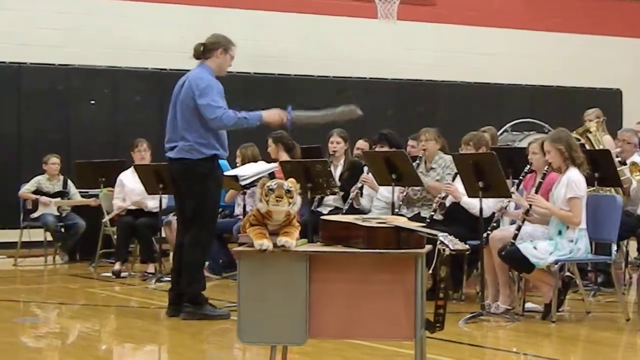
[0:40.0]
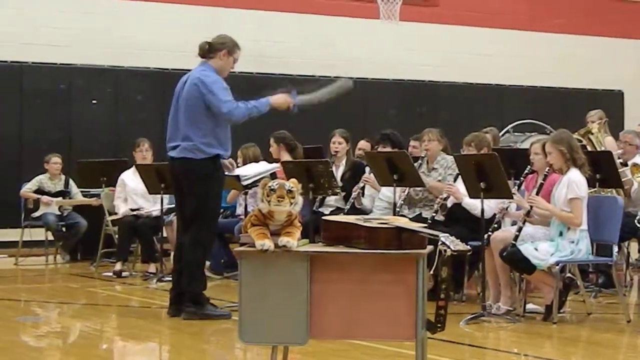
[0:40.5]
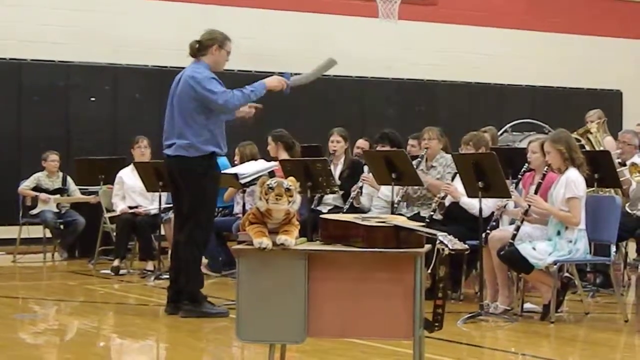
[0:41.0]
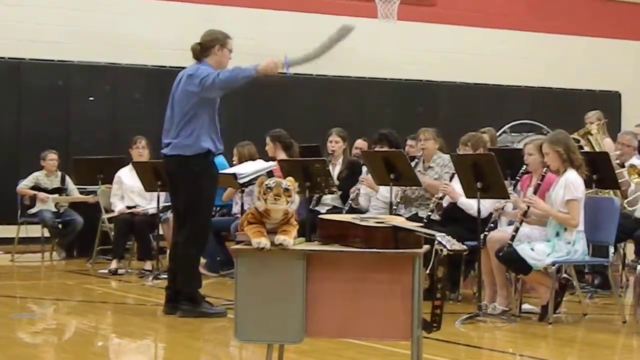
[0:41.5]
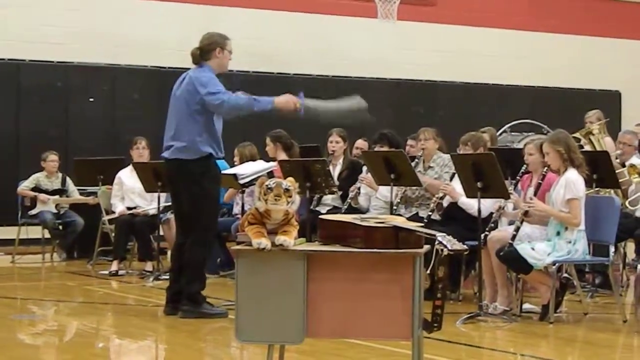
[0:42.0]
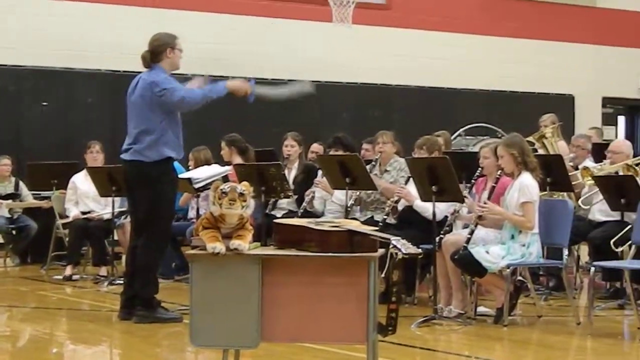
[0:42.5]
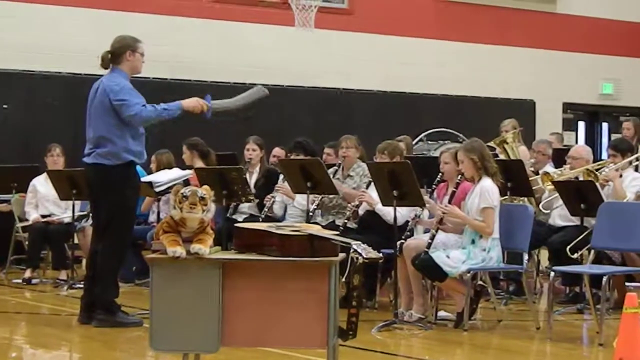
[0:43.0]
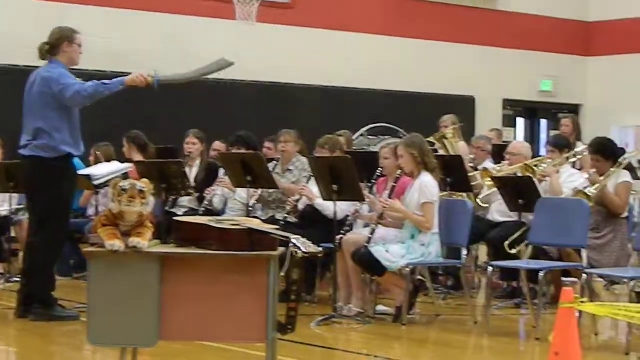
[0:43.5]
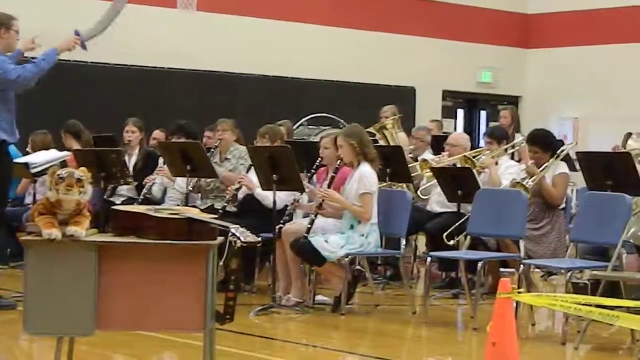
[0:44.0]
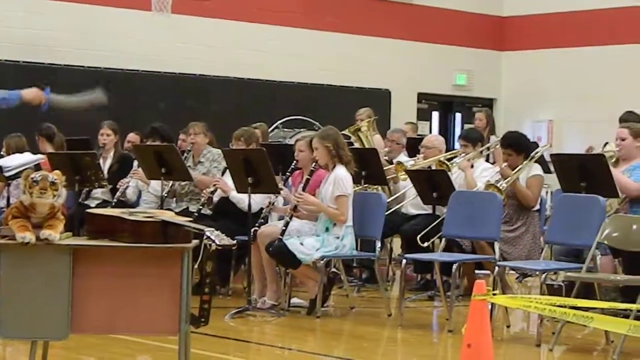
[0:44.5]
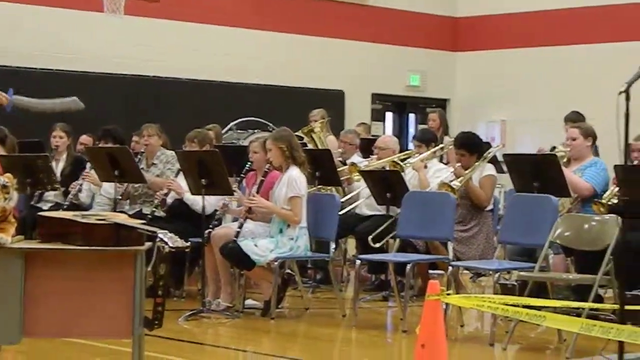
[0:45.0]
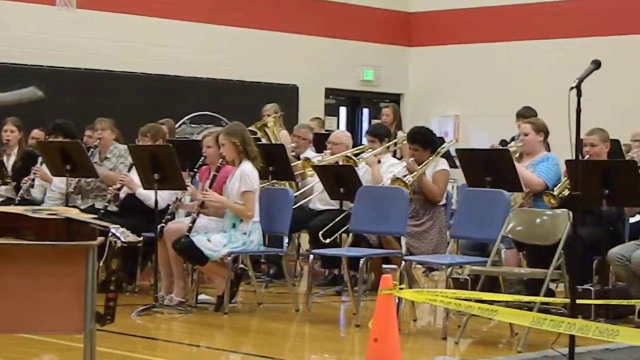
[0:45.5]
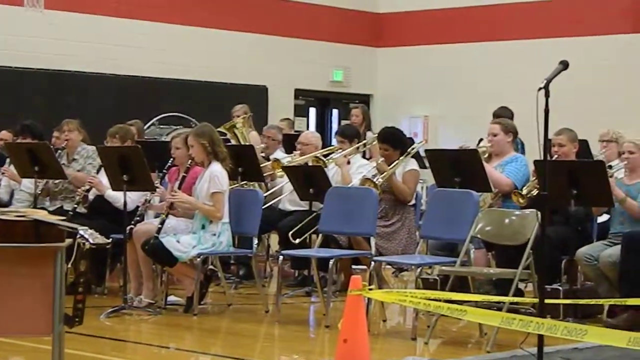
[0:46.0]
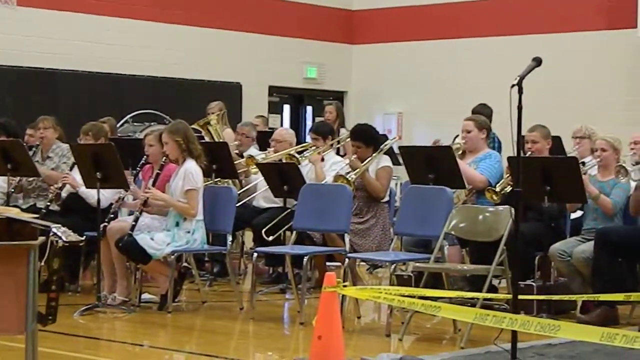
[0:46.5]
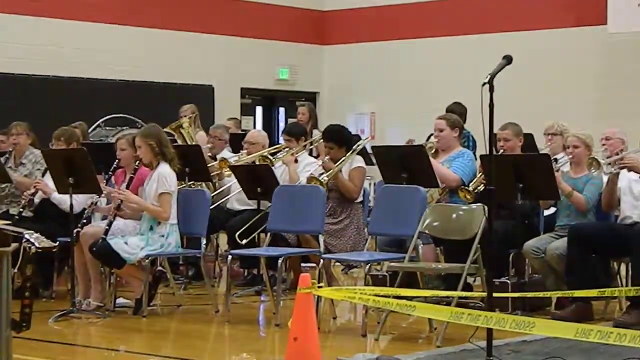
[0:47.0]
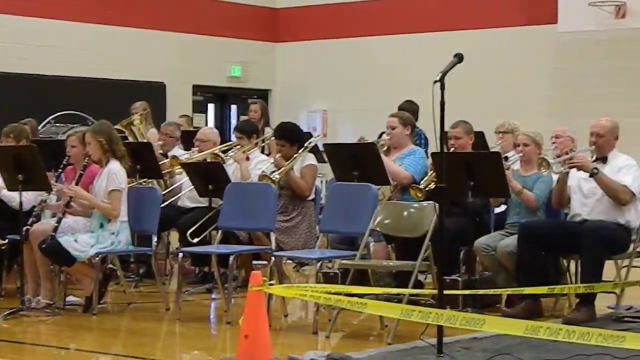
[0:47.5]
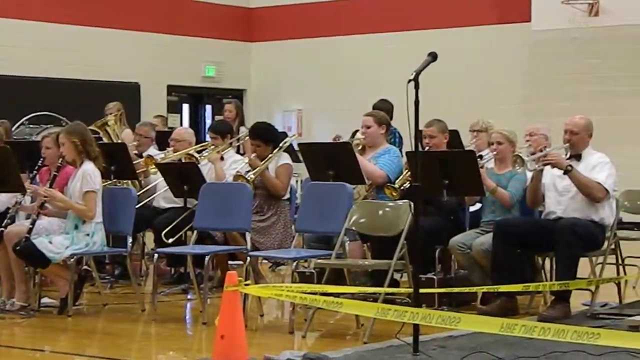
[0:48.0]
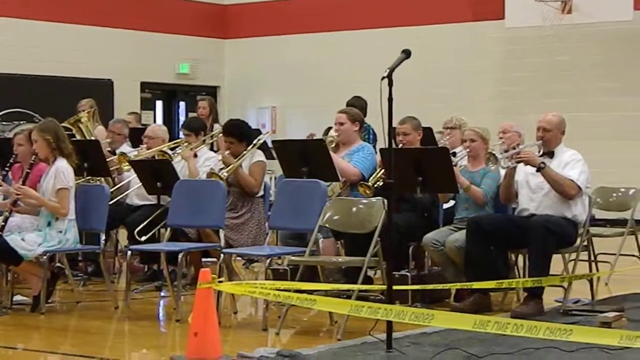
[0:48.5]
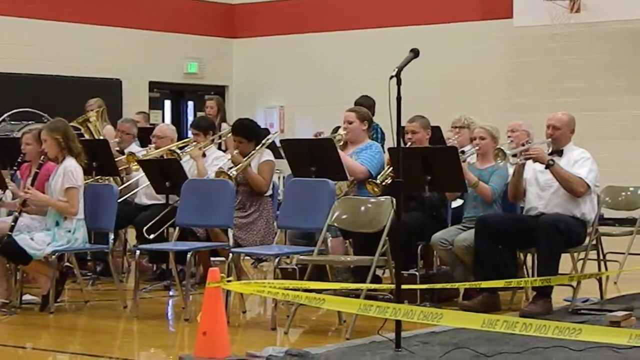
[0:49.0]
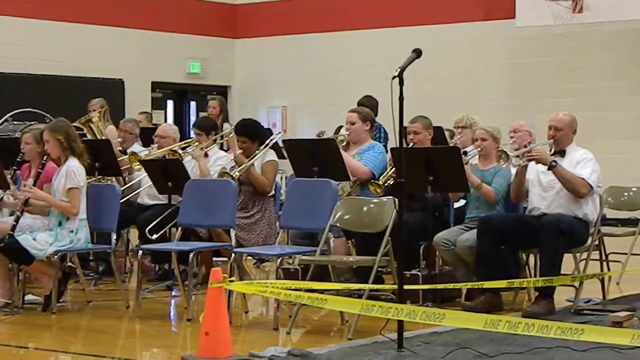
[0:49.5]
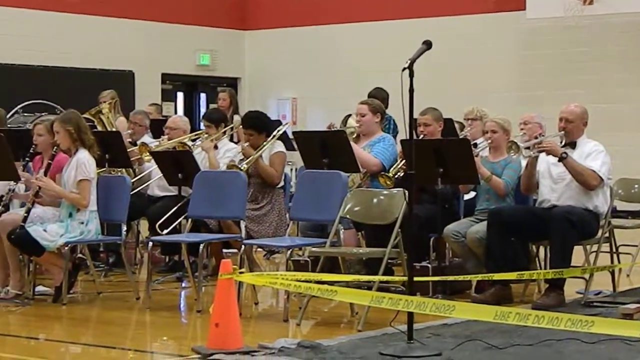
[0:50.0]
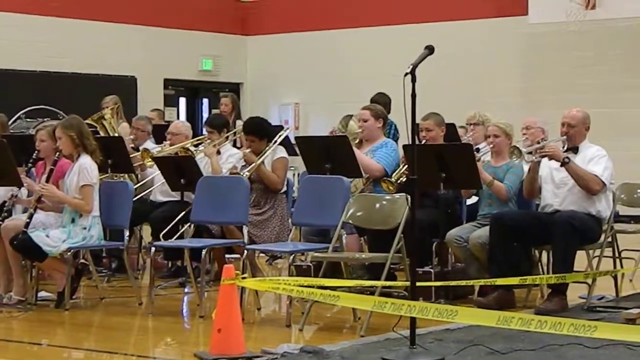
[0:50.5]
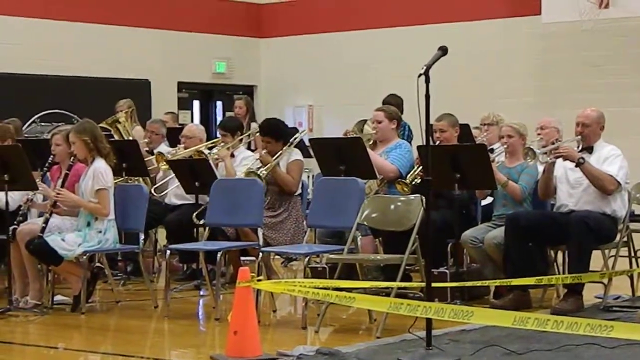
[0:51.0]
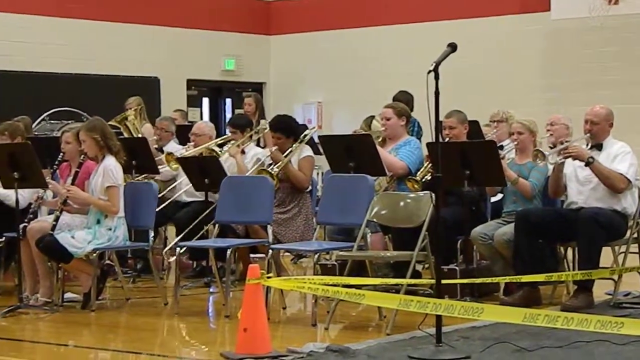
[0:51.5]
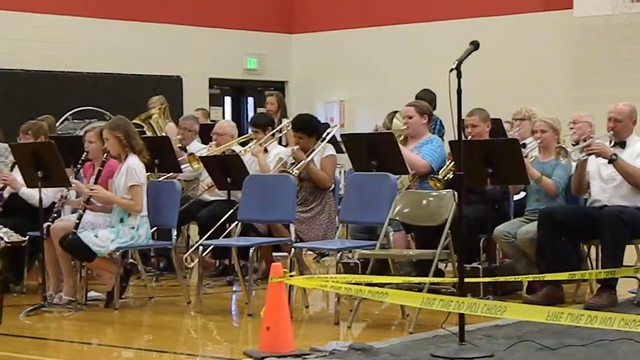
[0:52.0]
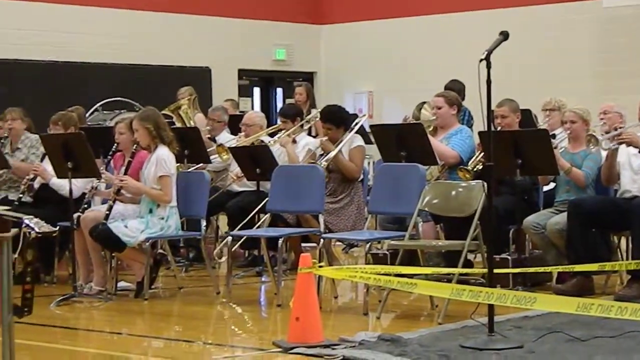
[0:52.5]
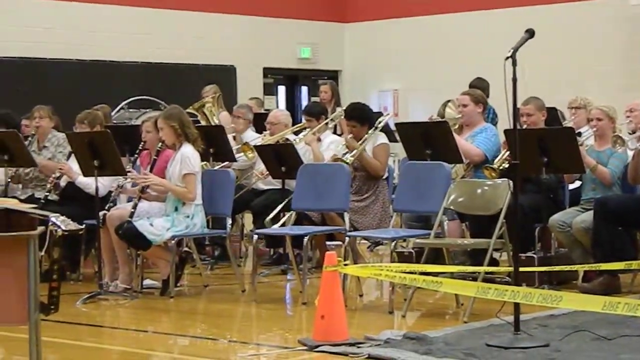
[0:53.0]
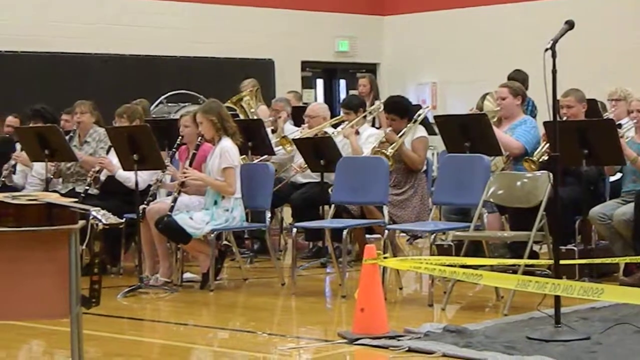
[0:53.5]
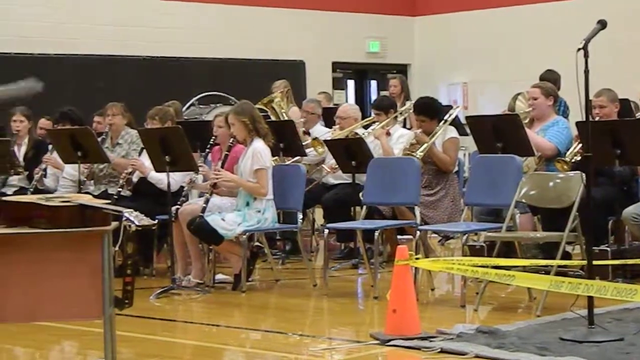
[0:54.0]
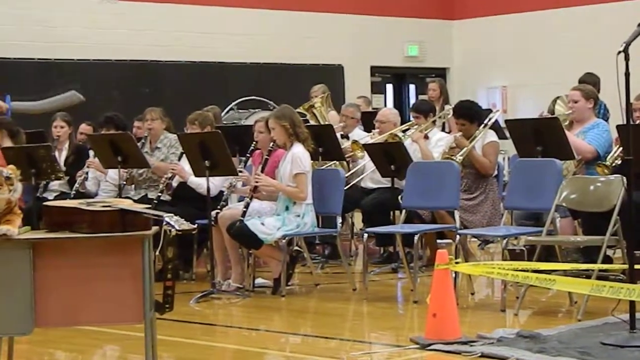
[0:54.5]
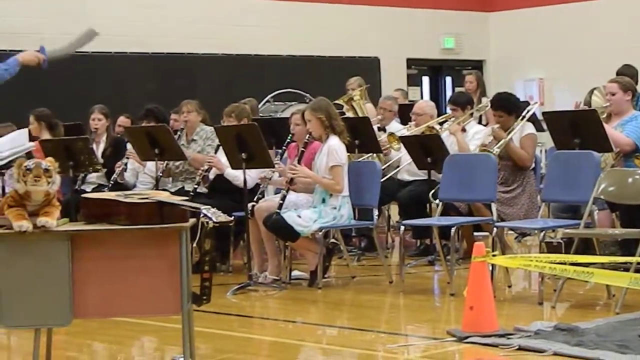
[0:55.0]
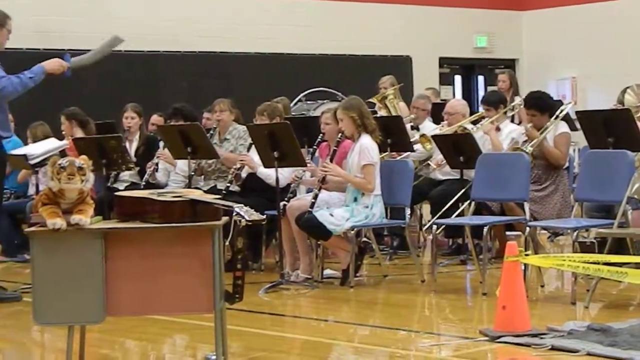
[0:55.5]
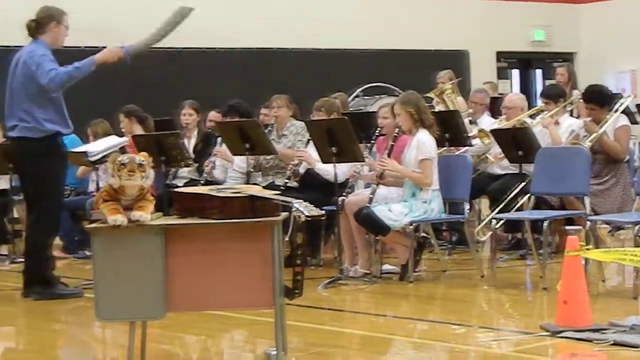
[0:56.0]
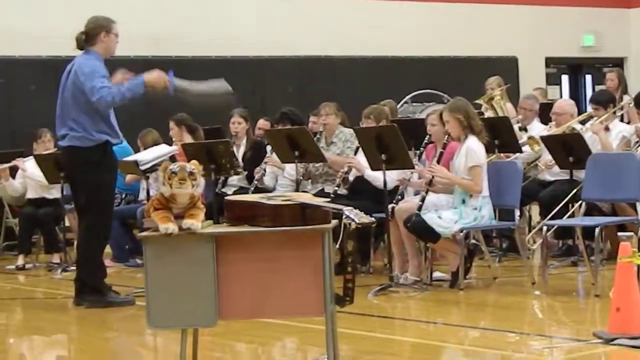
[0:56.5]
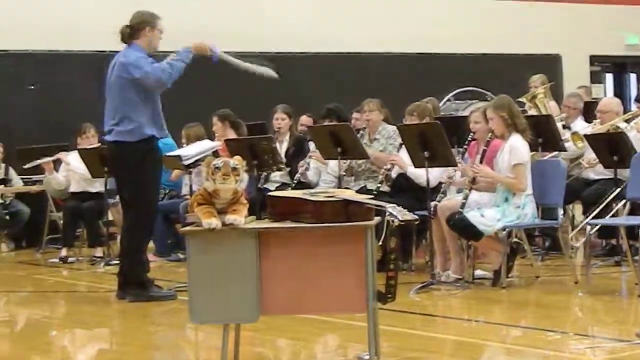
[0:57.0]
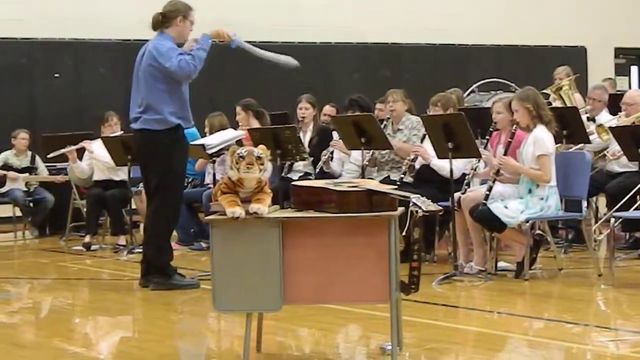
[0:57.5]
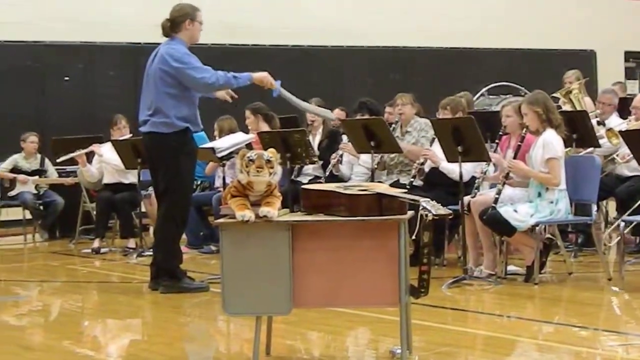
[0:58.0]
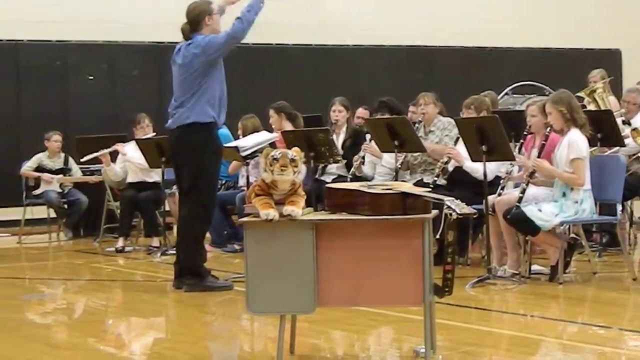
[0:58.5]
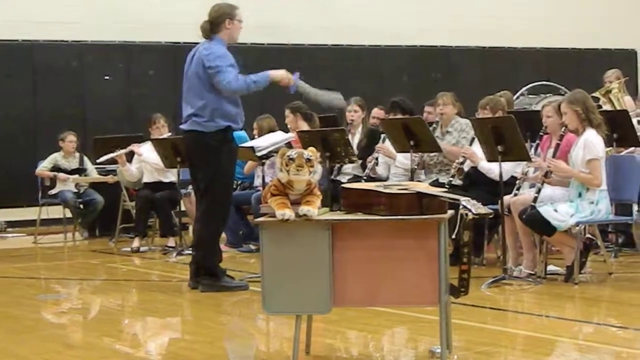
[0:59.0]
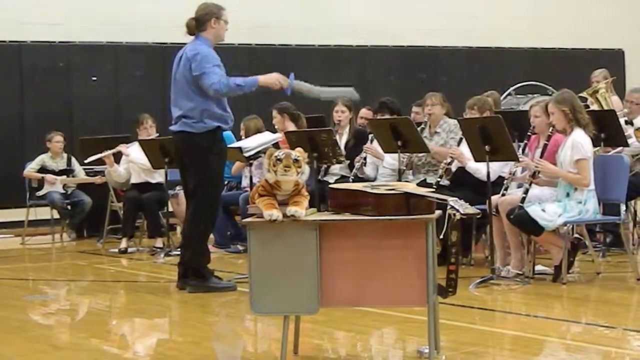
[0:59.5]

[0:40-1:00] A man in a long-sleeved blue shirt and black pants conducts a band in what looks like a school gymnasium, using a plastic sword in place of a conductor's baton. The camera pans over the musicians; while some young people are seated in the front, most of the people playing in the band appear to be adults. Many of them play brass instruments, blowing horns, and there are clarinets in the front and one lady playing a flute. All of the band members are seated in front of music stands. A young boy on the left of the screen plays an electric guitar. Behind the band are a basketball hoop on the wall and some padding against the wall. To the right of the conductor is a desk with a stuffed tiger sitting on it and a guitar next to it resting on its back. The conductor waves his arm with the sword in it. As the camera pans around, a door with an exit sign and another basketball hoop are visible at the back of the gymnasium.